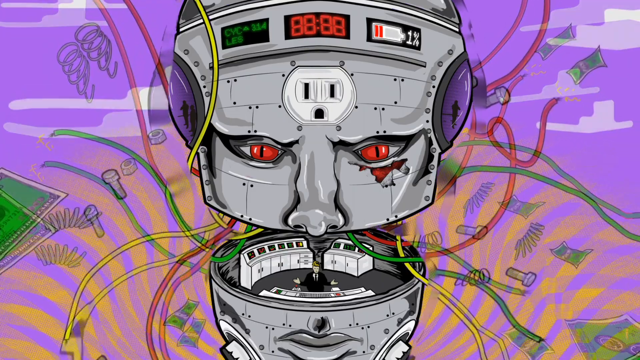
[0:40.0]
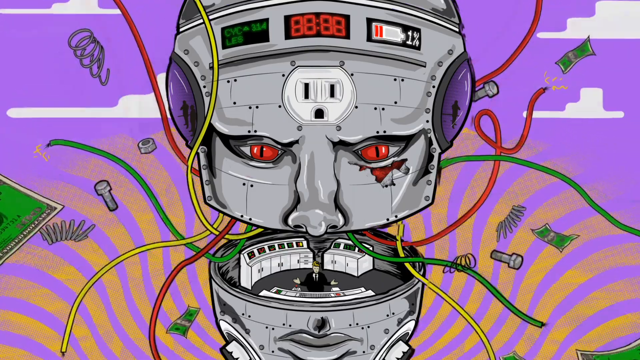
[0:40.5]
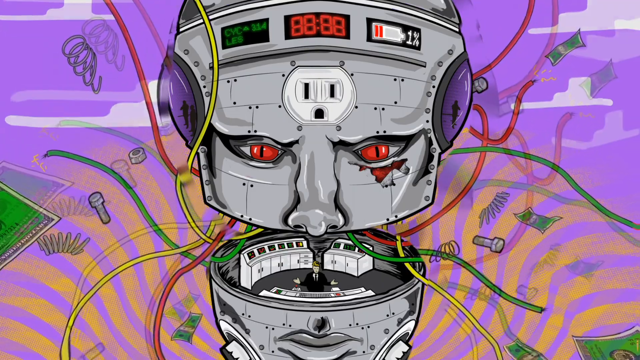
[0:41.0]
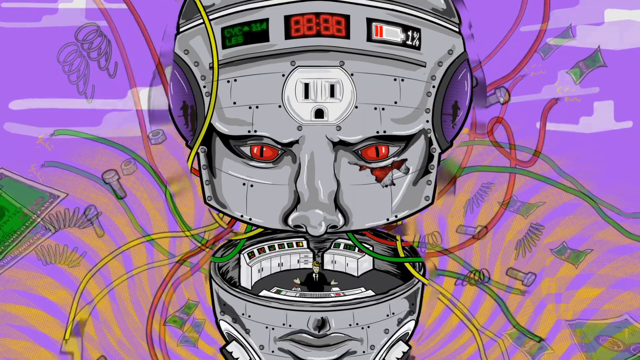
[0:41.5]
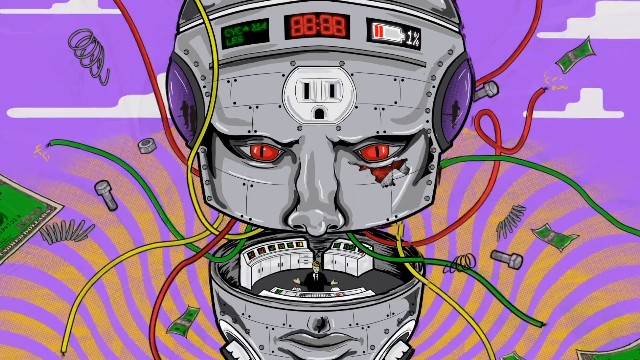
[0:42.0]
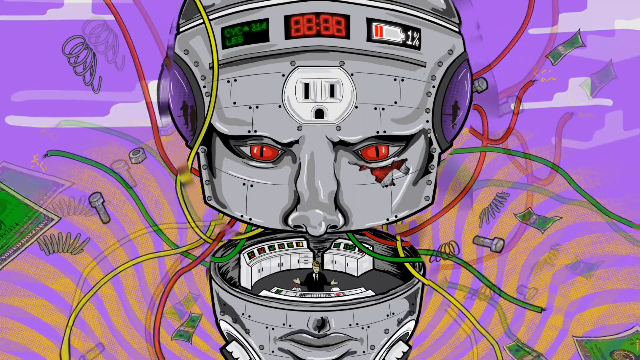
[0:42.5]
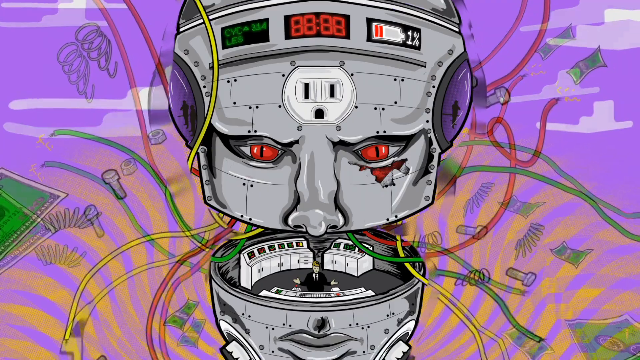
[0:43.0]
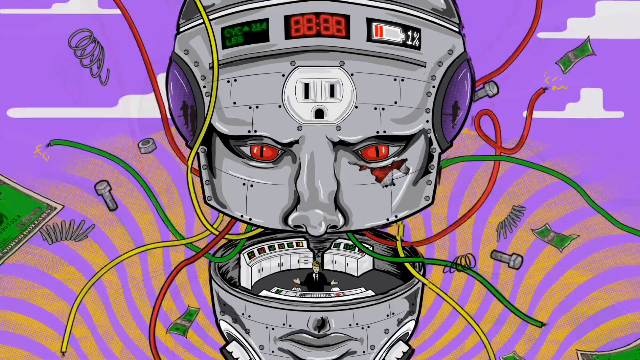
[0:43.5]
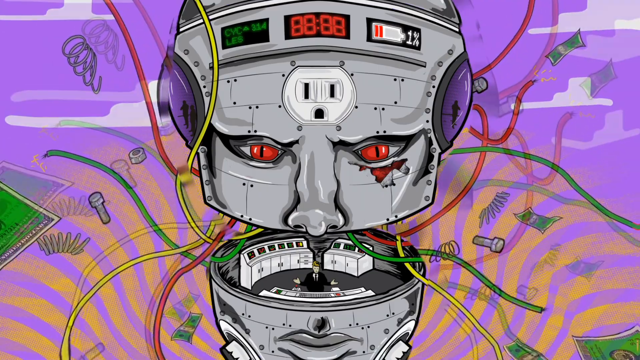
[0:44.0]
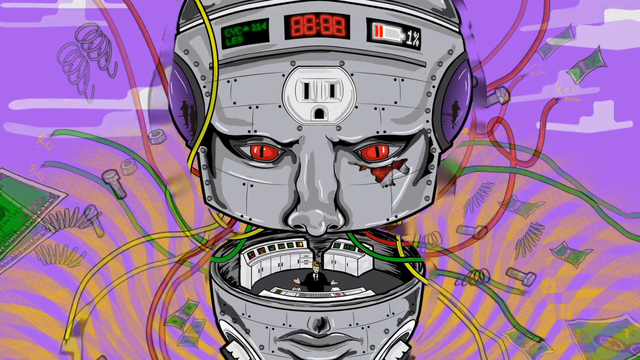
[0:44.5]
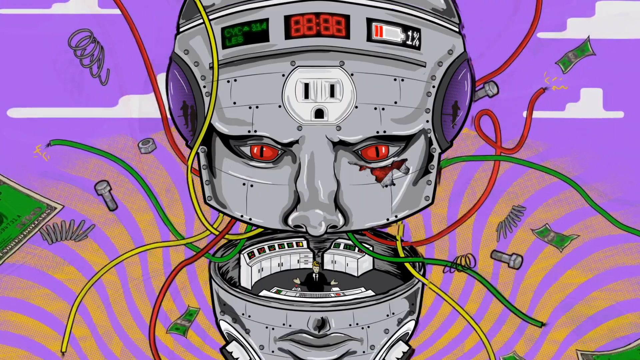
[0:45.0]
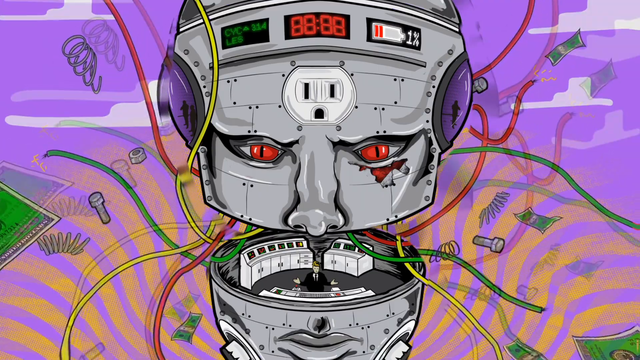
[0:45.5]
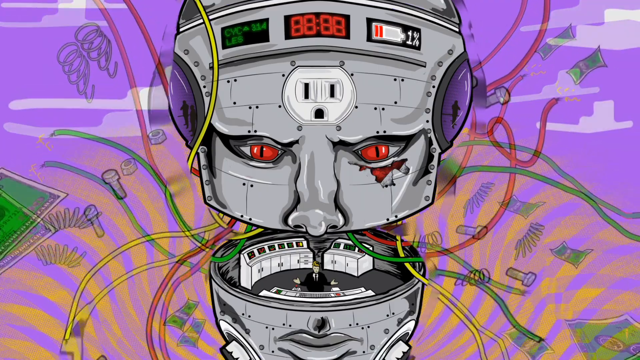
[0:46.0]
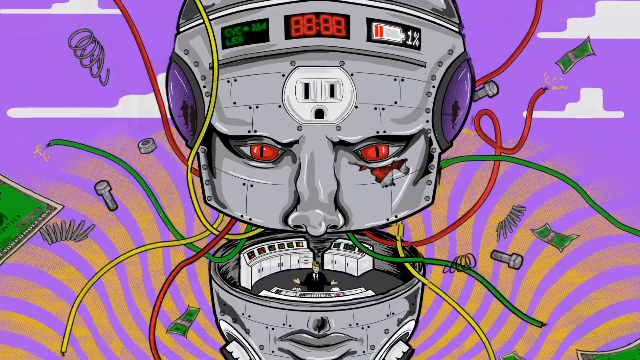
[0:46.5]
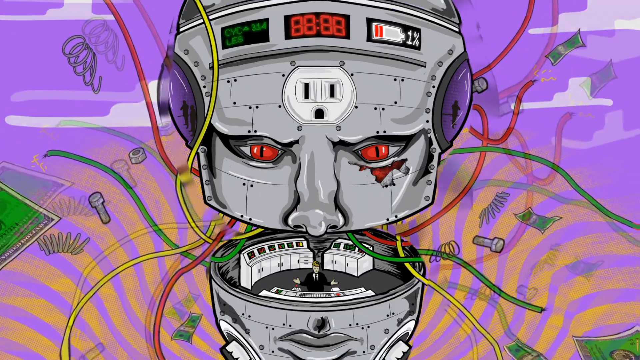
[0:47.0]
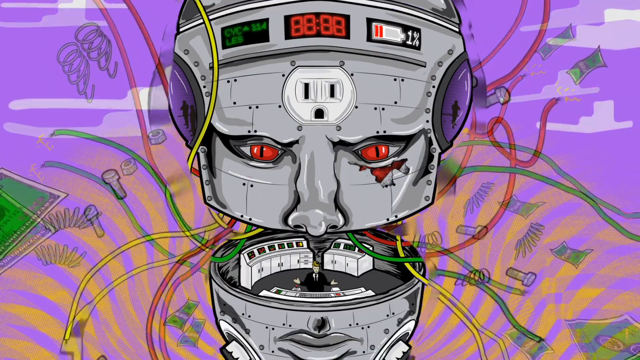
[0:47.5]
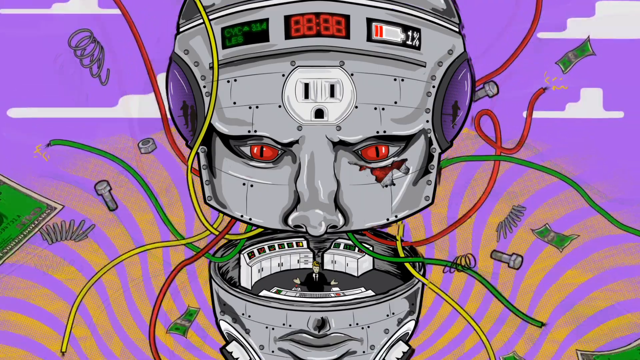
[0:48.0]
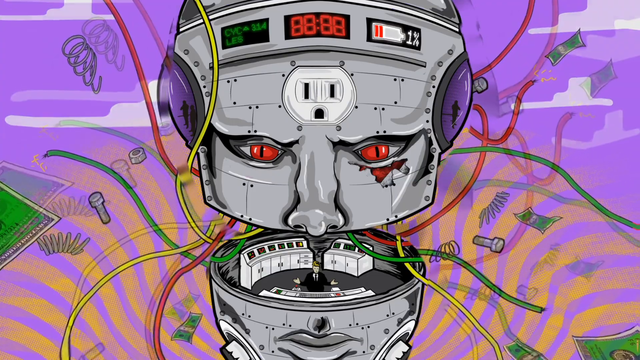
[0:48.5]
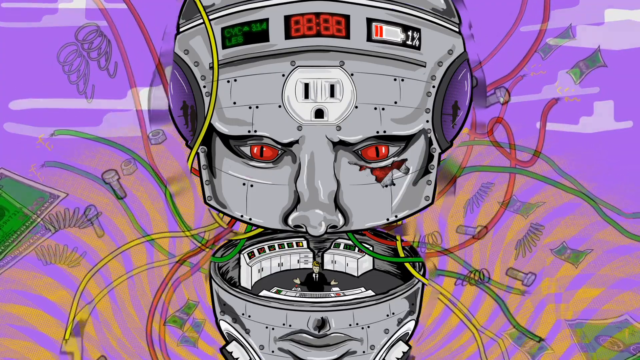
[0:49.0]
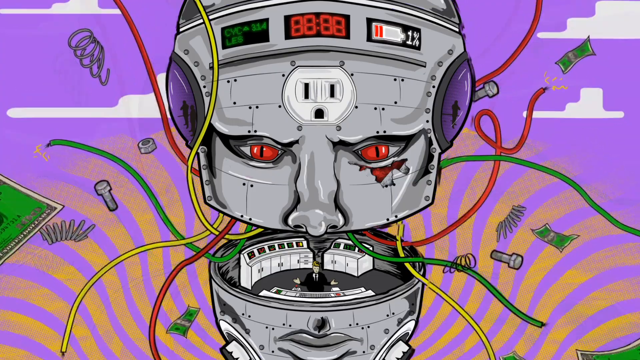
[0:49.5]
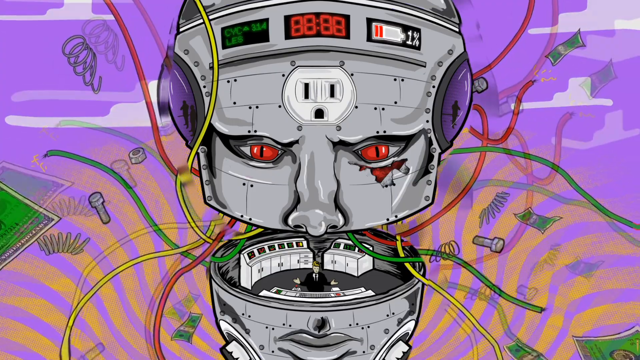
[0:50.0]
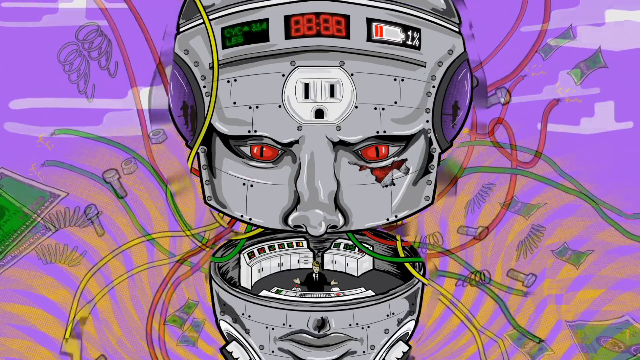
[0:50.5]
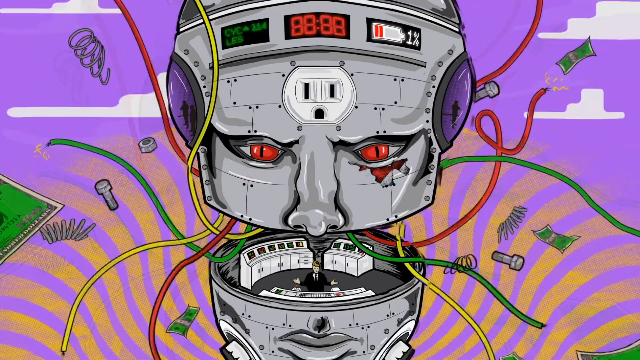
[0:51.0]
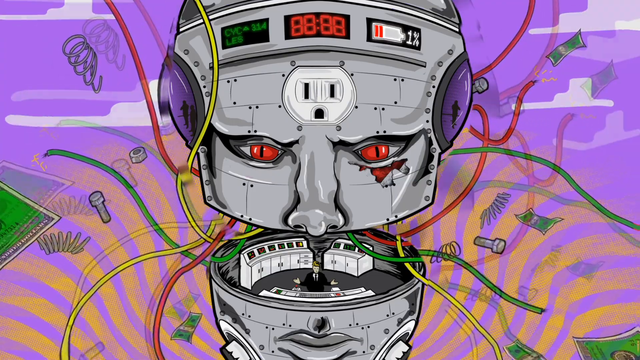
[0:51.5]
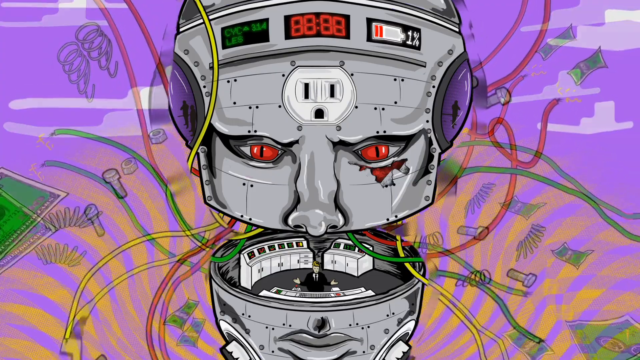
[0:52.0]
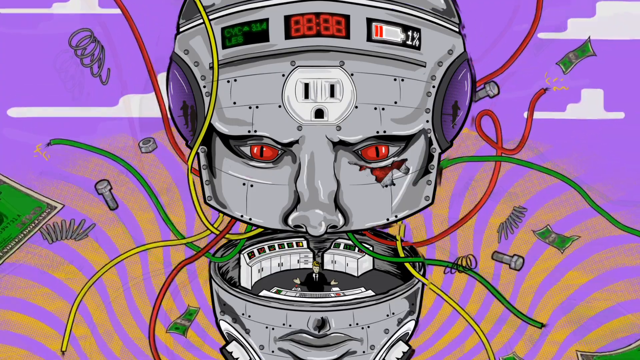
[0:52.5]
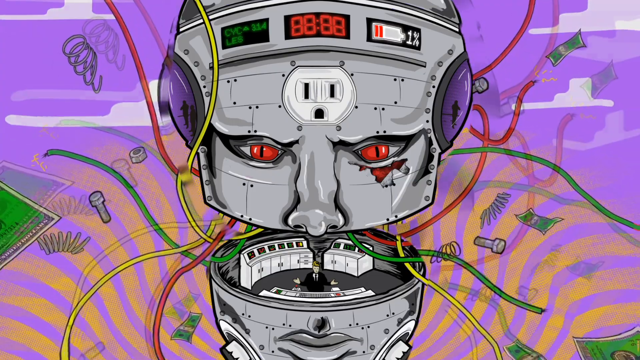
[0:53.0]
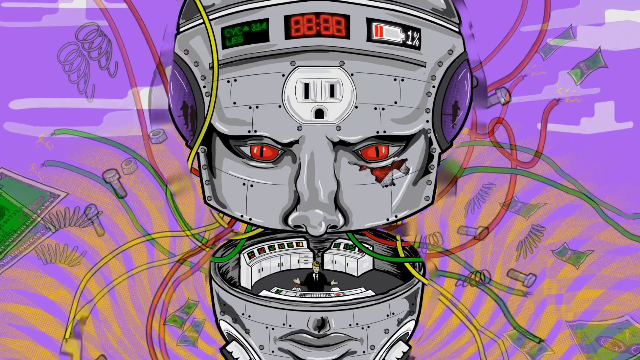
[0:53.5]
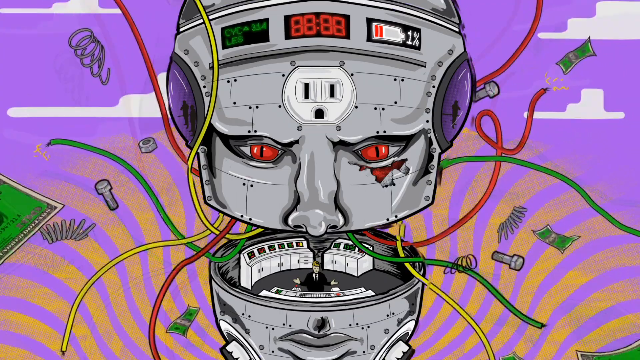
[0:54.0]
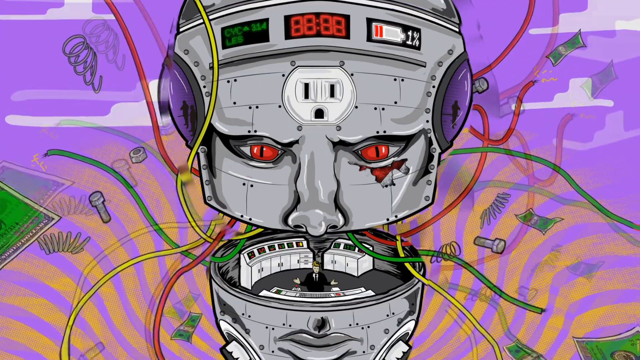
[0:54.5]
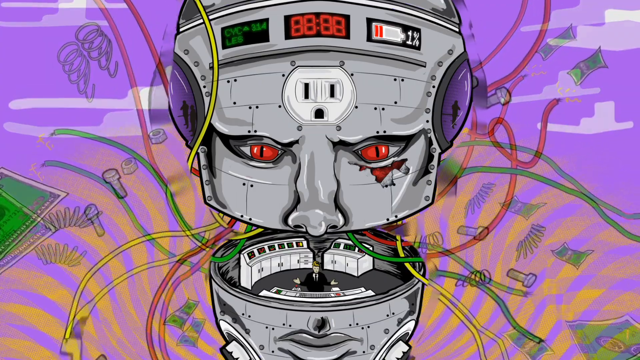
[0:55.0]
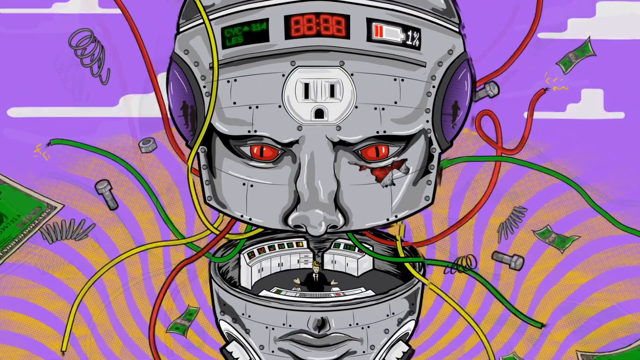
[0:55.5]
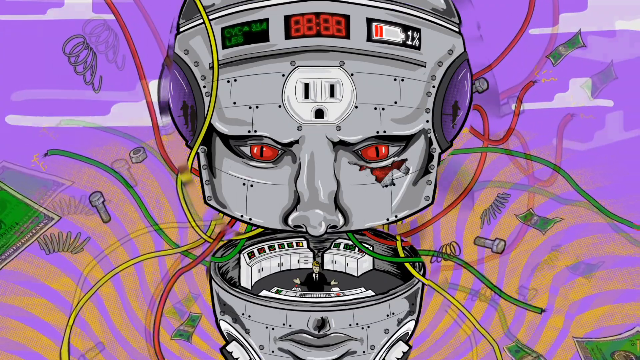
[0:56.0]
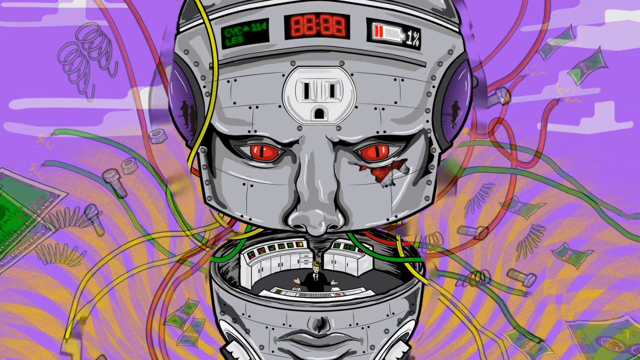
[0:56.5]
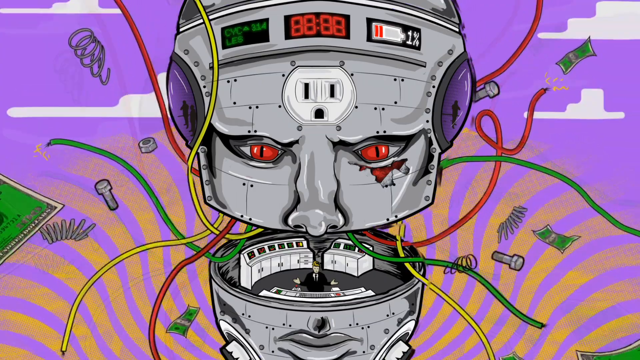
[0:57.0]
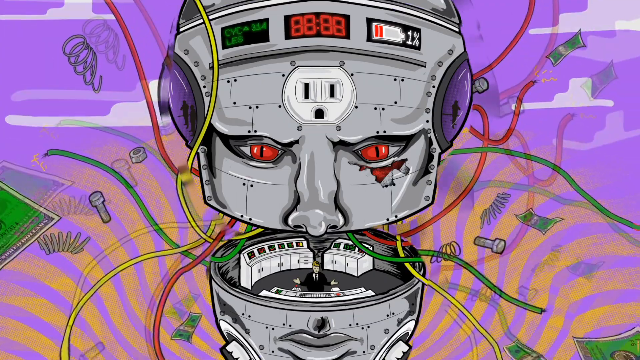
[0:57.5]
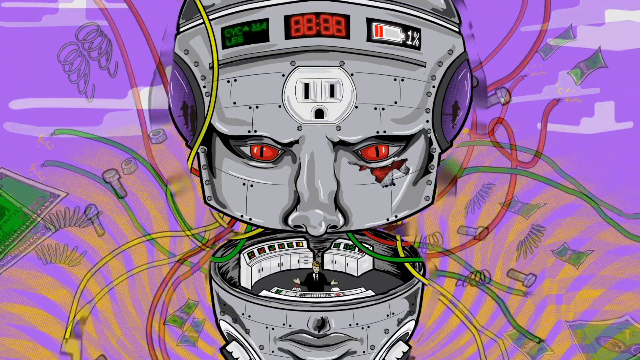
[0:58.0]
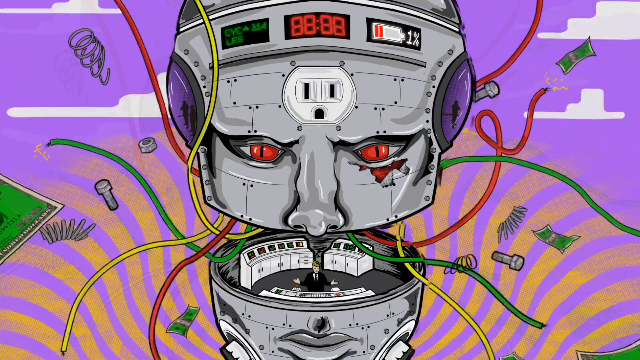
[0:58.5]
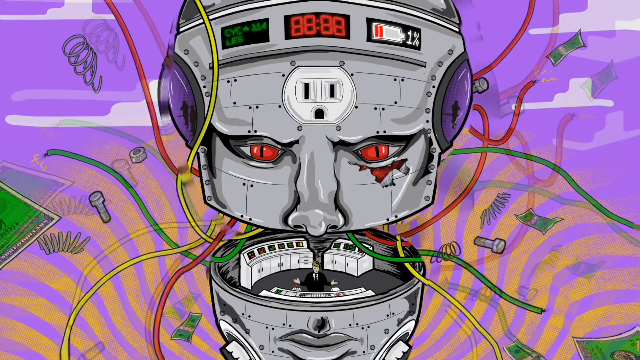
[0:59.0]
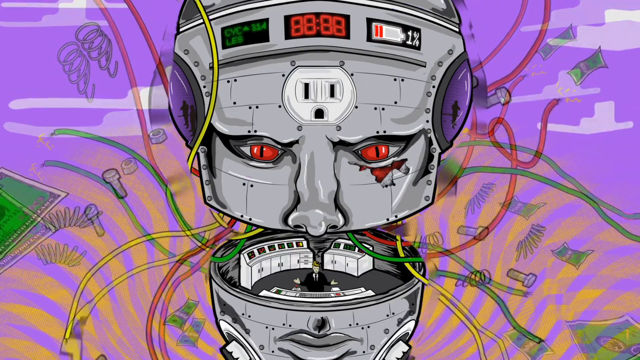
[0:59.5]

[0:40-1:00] The same animation shows the head of a giant robot that is a control room. A man stands in the control room facing a panel. The top of the control room is the robot's nose, eyes and forehead, with a timer in the middle at the top reading "88;88". There is 1% battery power left, and the text "314 cycles" is shown. The bottom of the control room appears to be the robot's chin and mouth. In the background, yellow wavy lines, possibly power, move counterclockwise. Red, green and yellow wires come out of the robot's head, and springs, bolts and washers are in the background, with some dollar bills floating around. The farthest background is purple with white shapes that might be clouds. A giant white outlet is in the middle of the robot's head. The robot's eyes are red, and under the eye on the viewer's right there looks like a bleeding injury.